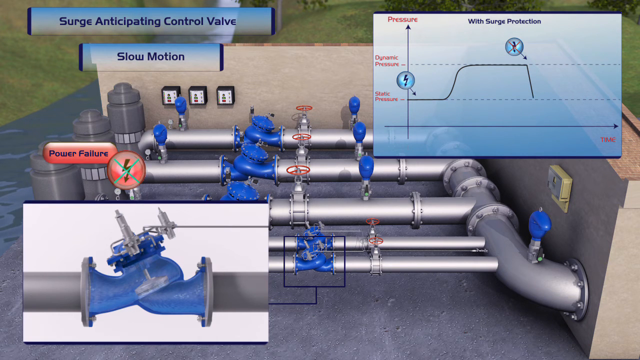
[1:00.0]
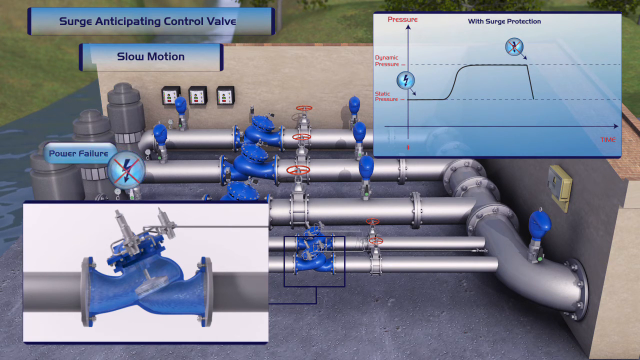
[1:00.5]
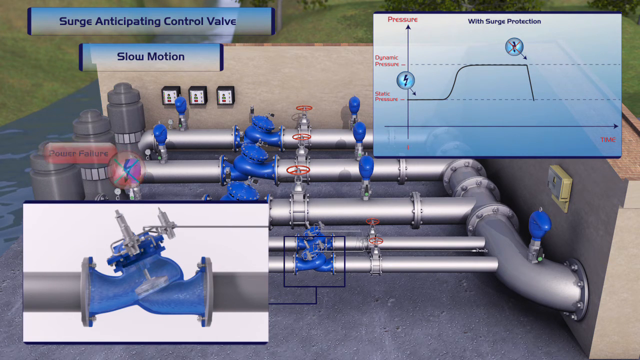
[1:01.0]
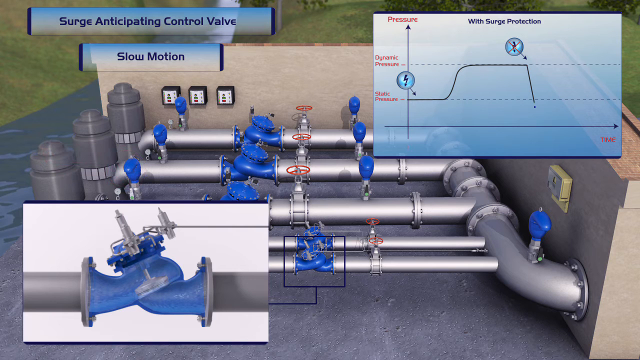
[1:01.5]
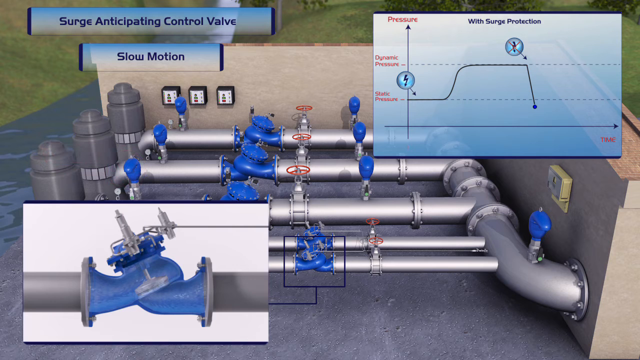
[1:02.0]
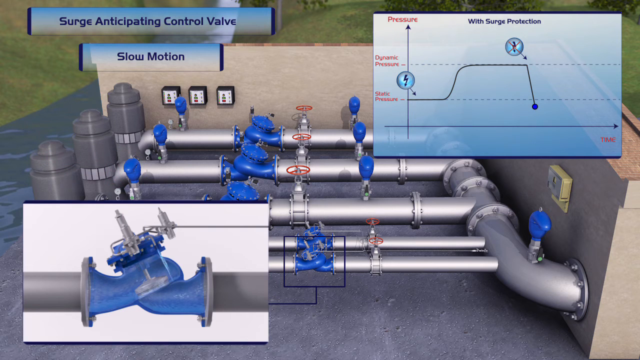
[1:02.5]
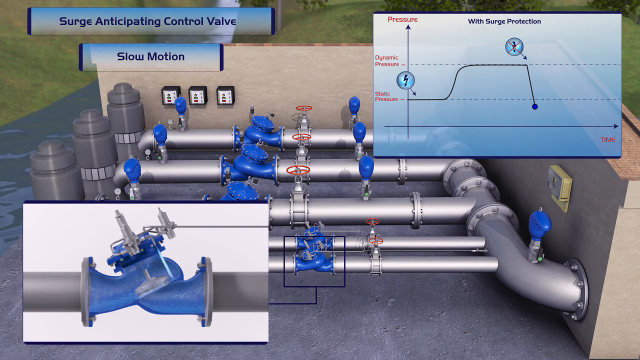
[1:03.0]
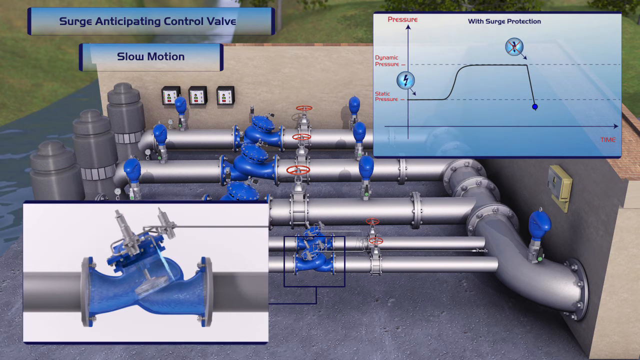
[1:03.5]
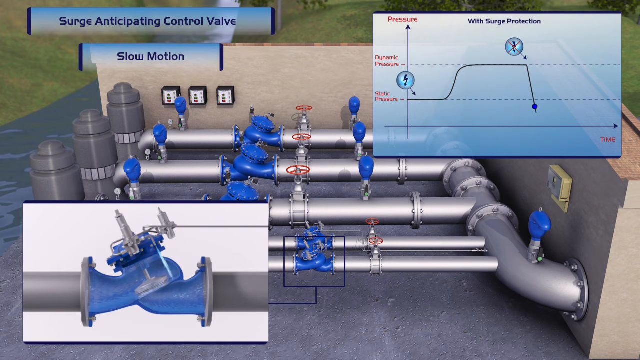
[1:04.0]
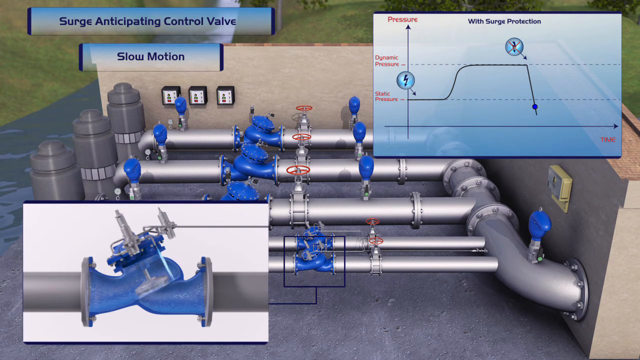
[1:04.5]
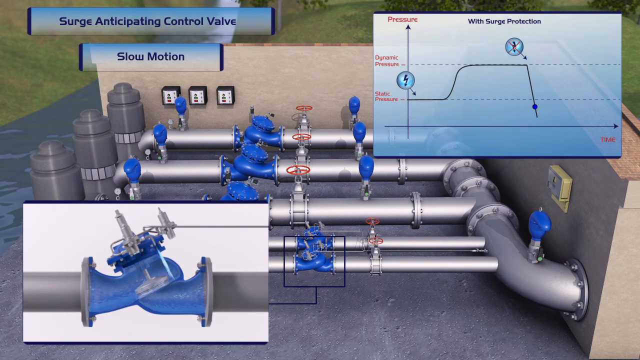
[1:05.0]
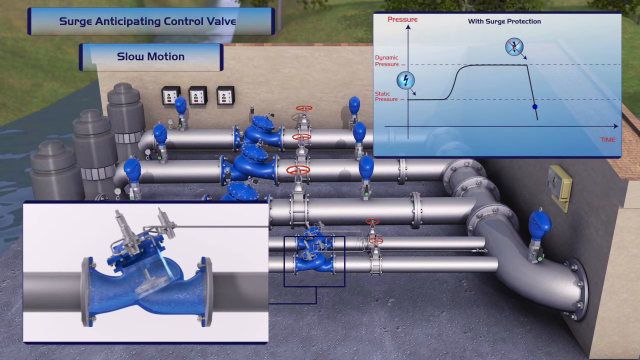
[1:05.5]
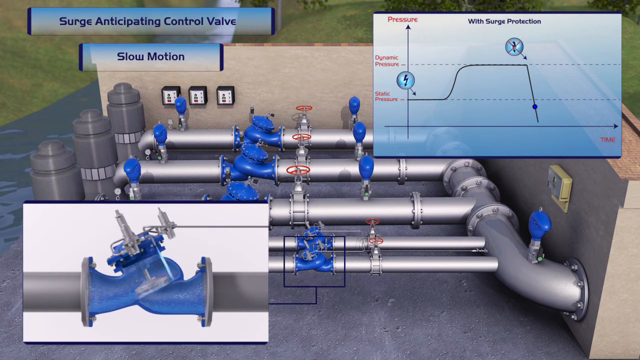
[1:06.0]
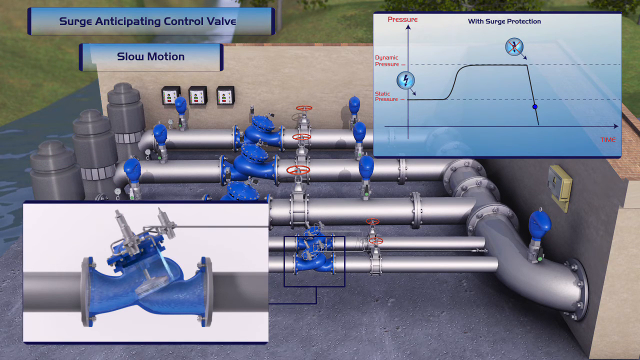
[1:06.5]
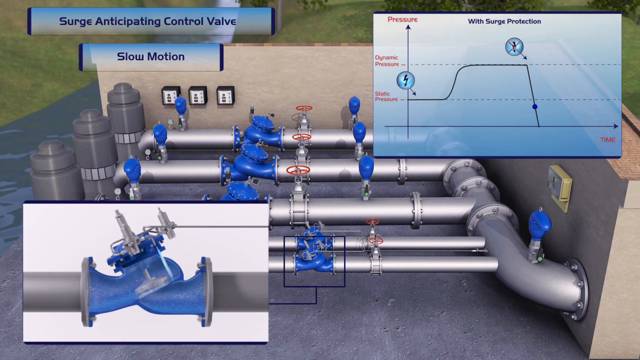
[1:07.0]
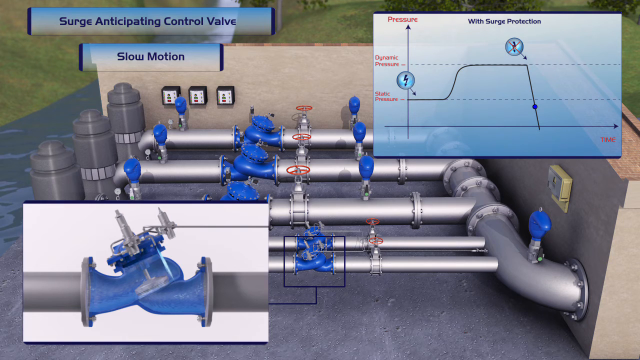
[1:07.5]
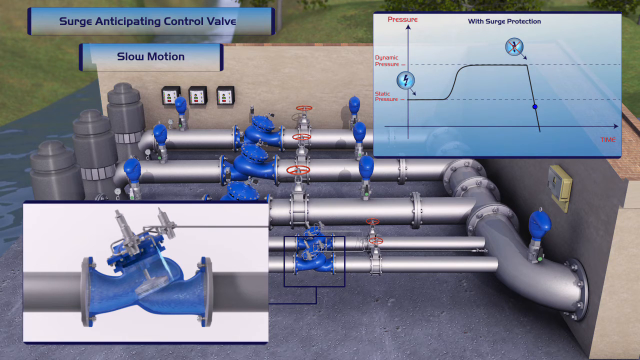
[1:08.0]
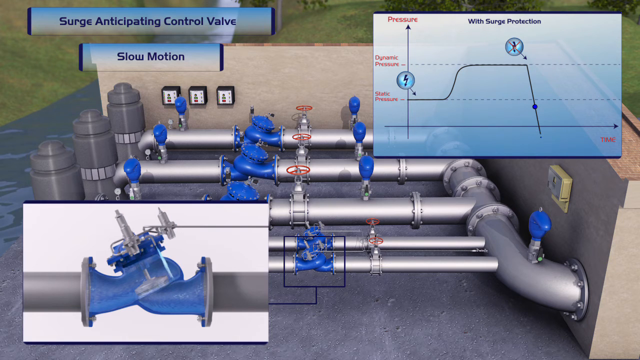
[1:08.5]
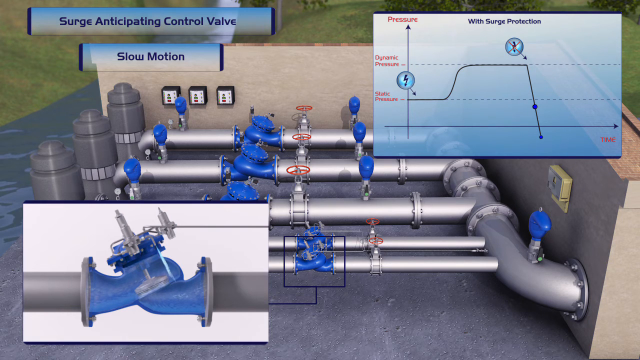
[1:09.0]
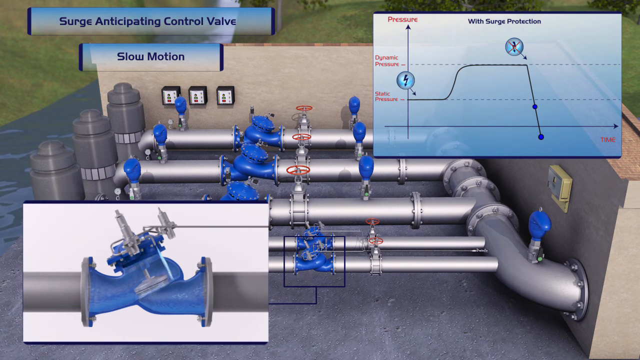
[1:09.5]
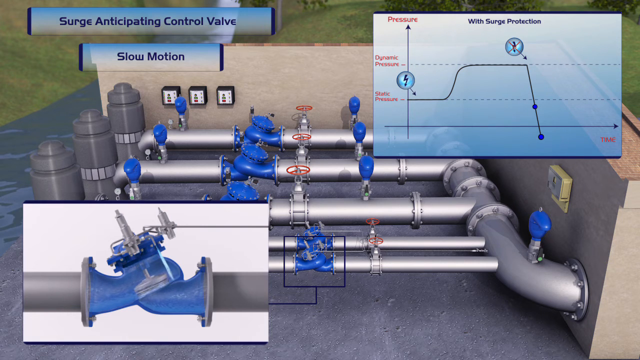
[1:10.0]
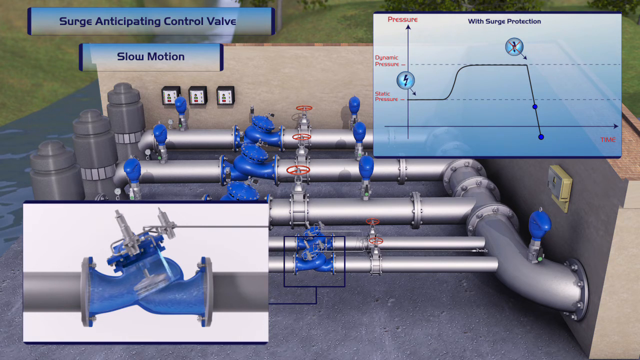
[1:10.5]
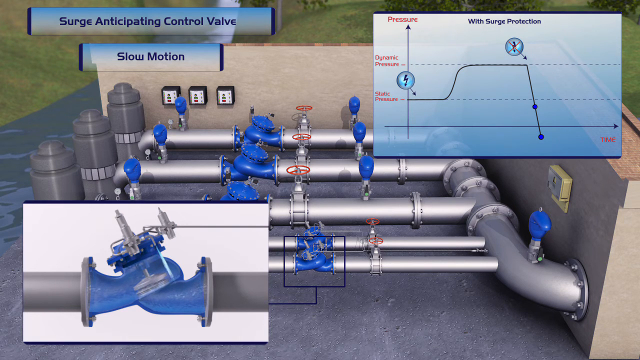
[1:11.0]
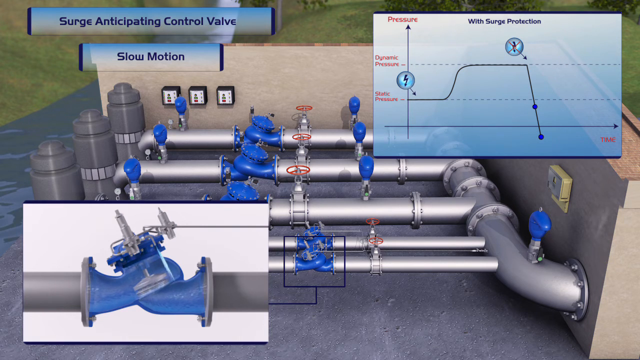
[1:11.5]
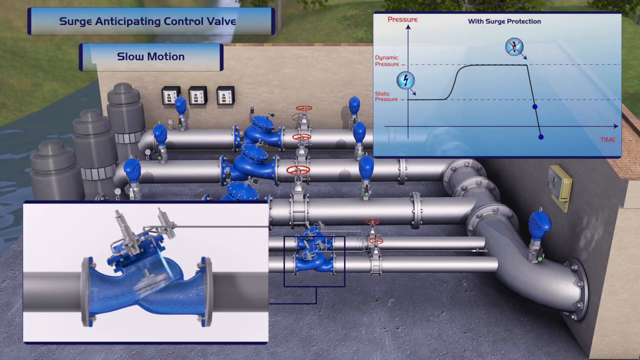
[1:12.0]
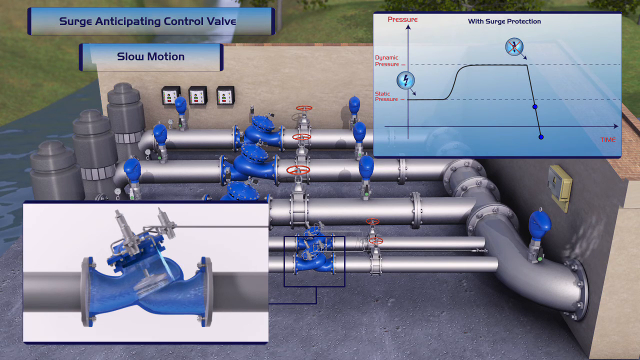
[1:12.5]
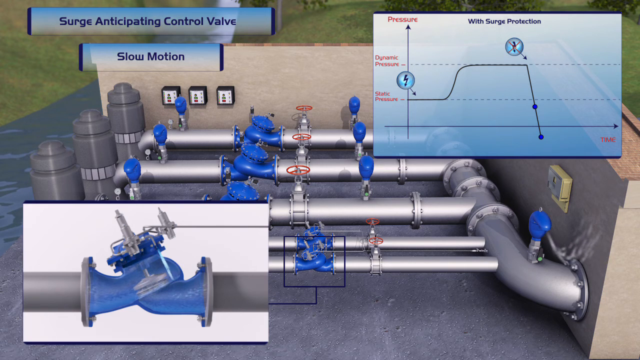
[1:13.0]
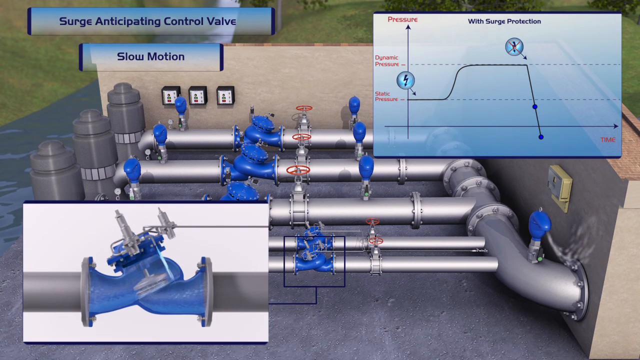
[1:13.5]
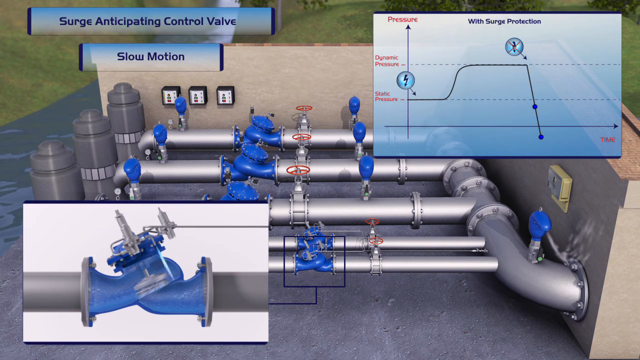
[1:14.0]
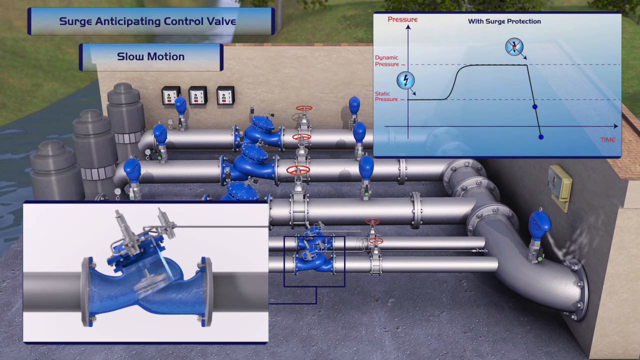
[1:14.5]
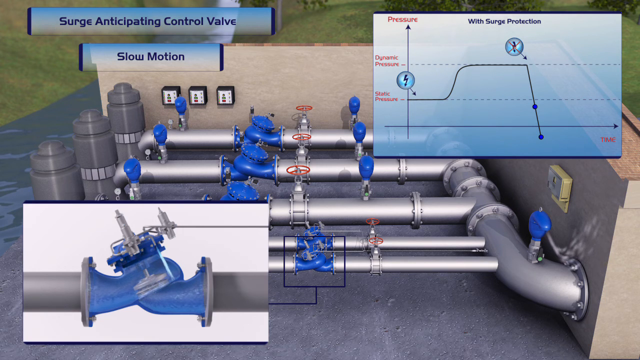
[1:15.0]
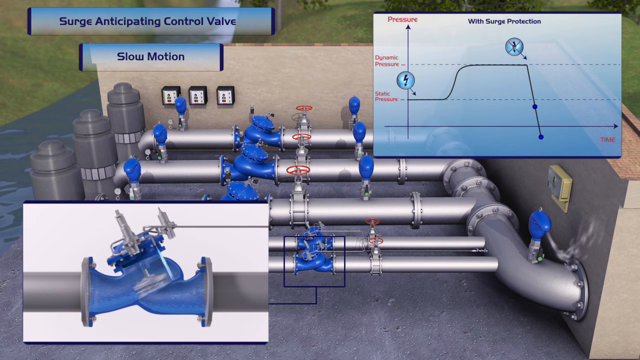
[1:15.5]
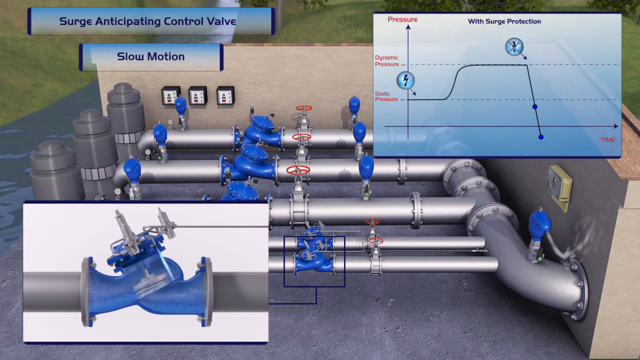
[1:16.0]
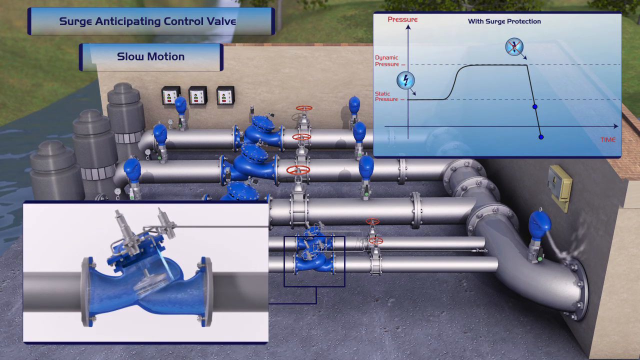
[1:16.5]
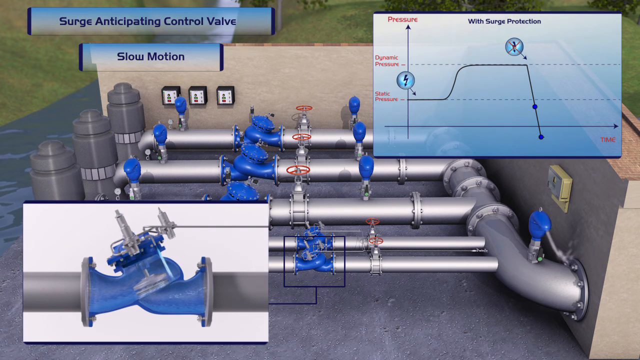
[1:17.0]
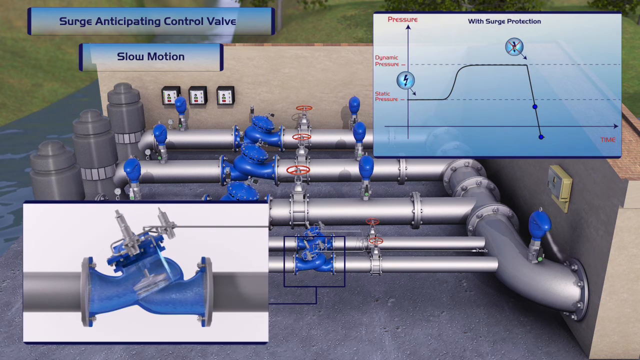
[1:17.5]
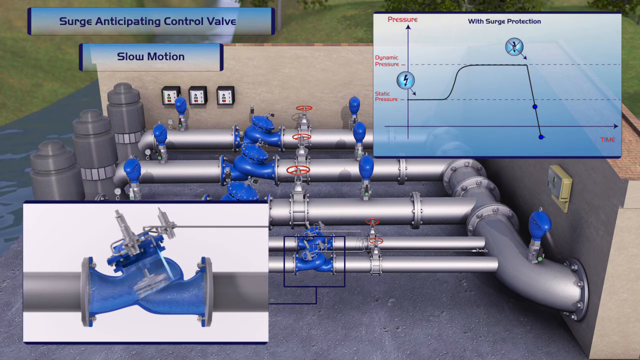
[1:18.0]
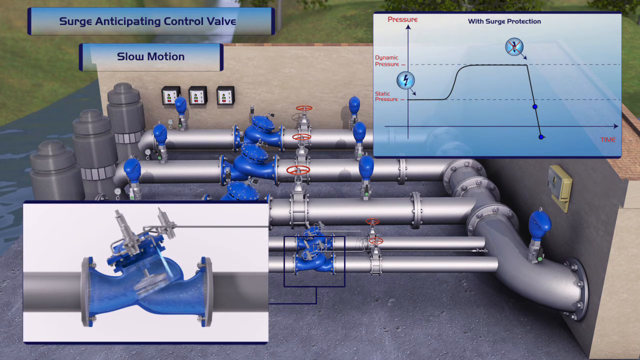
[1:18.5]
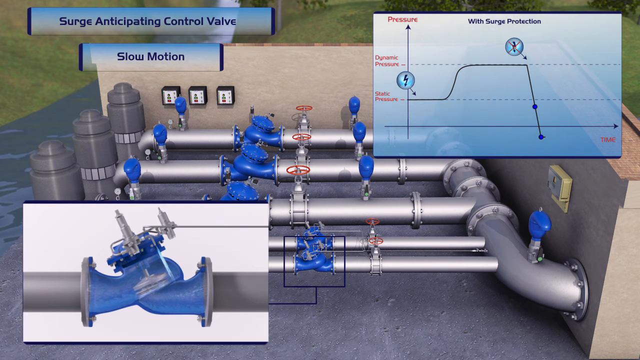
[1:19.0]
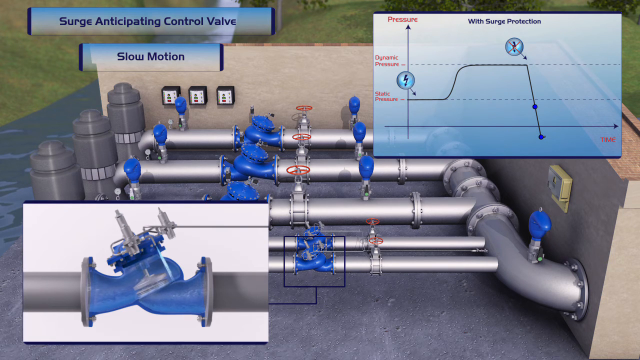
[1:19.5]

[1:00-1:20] The system of pipes on the bank of a body of water has three larger pipes with two smaller pipes in front of them. In the lower left corner is a close-up of a valve in the center of the small pipes. On the right is the bar graph with surge protection, with static pressure as the bottom dotted line and dynamic pressure on the top. The line goes a little bit down the static pressure, then goes up vertically, runs horizontally again on dynamic pressure, and then goes back down toward static pressure. After reaching static pressure, it crosses below it, moving vertically, and a blue dot appears. It moves further down through the solid line at the bottom, and another blue dot appears. The bar graph has just two circles: a circle indicator with a lightning bolt pointing to the static pressure line at the very beginning, and, just after the center, another blue circle with a red X on it.